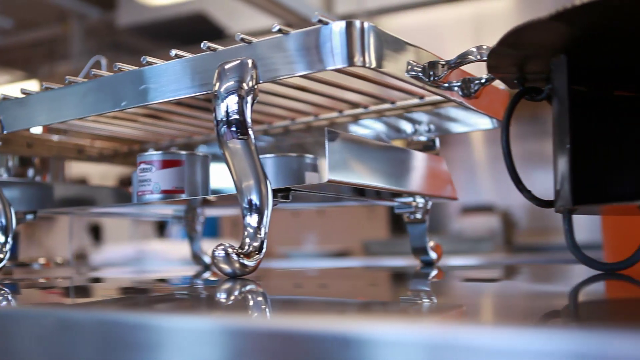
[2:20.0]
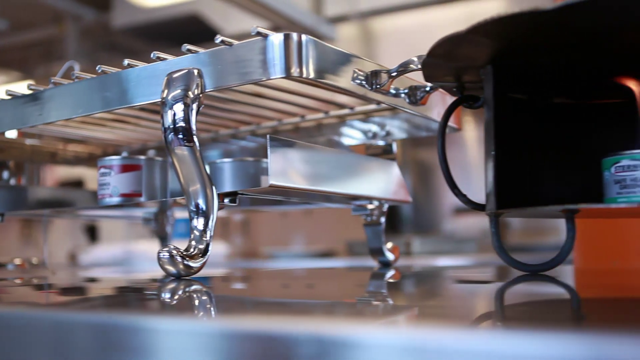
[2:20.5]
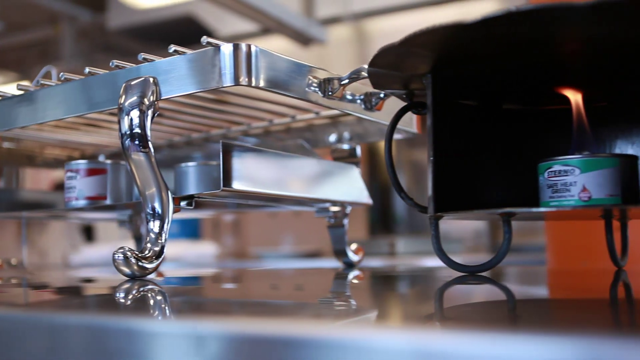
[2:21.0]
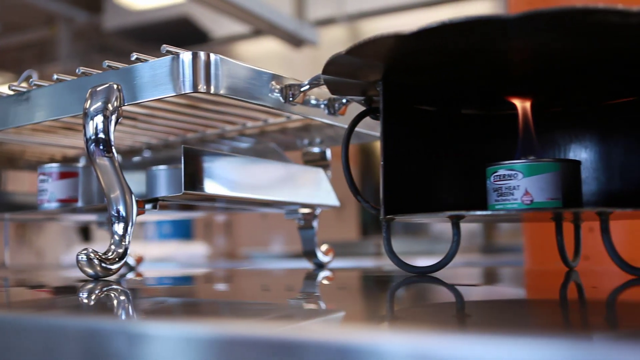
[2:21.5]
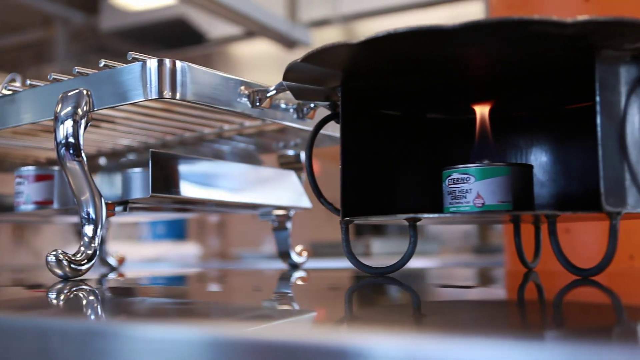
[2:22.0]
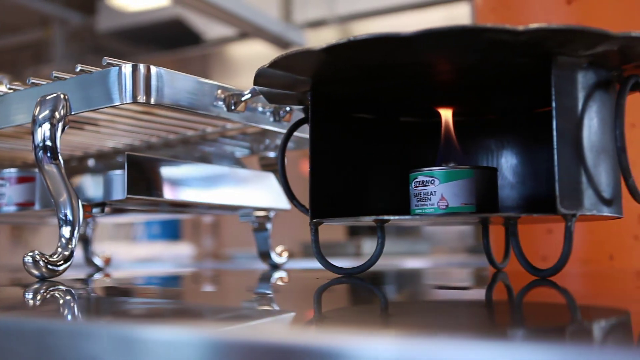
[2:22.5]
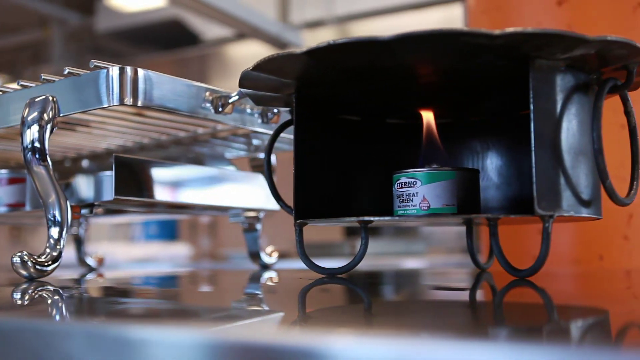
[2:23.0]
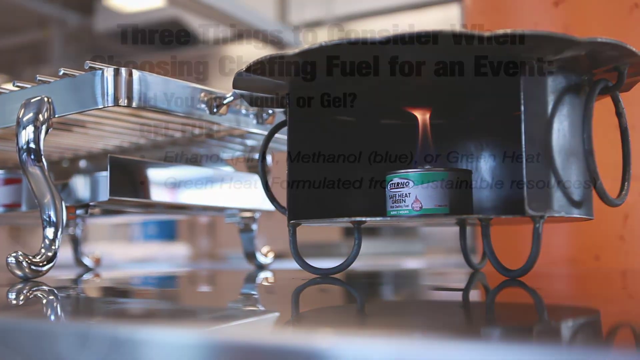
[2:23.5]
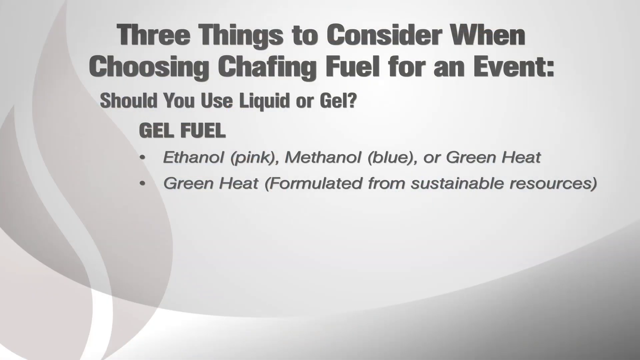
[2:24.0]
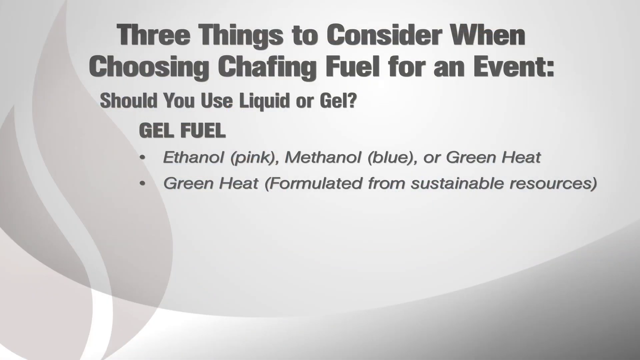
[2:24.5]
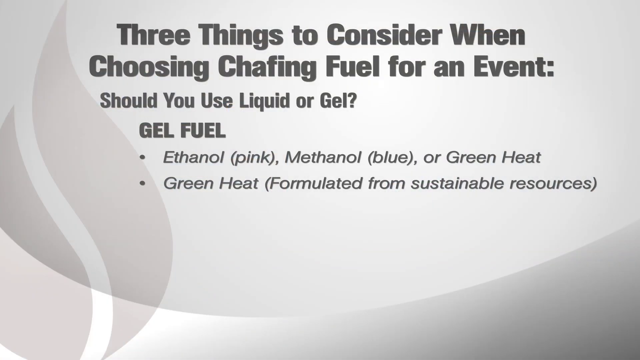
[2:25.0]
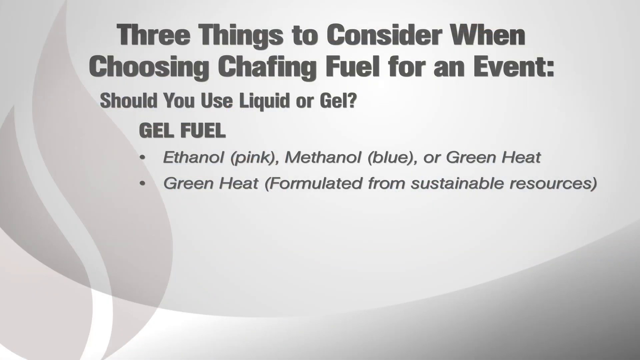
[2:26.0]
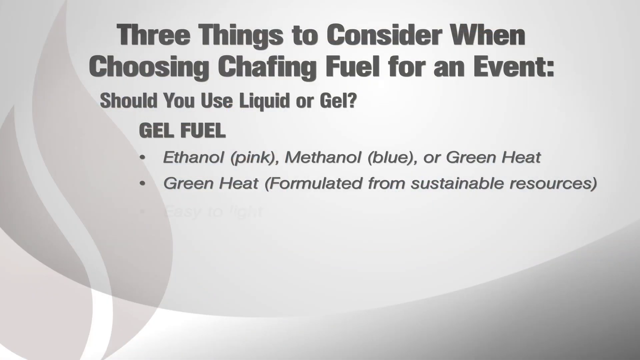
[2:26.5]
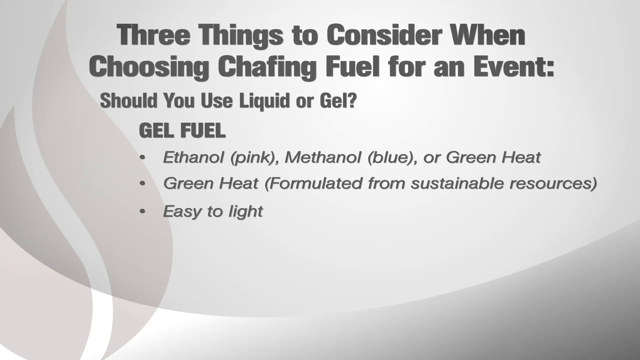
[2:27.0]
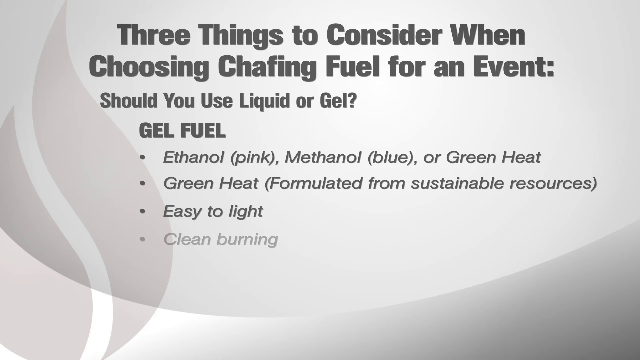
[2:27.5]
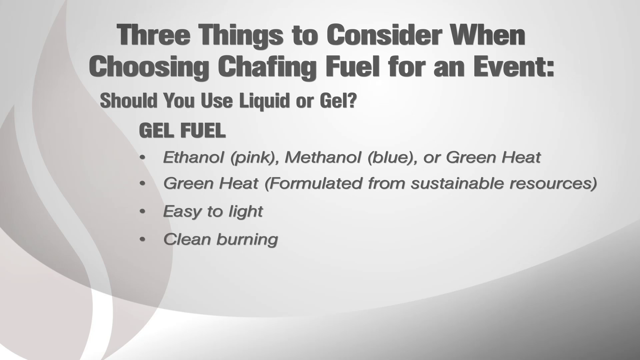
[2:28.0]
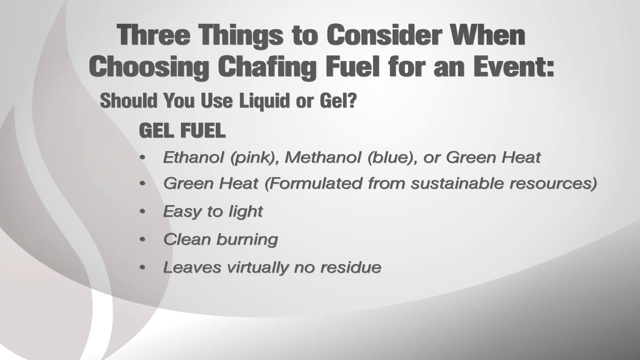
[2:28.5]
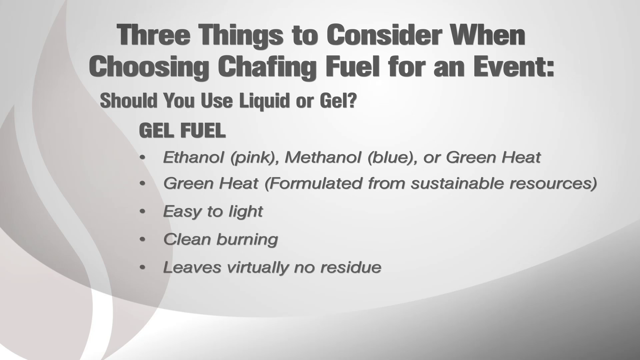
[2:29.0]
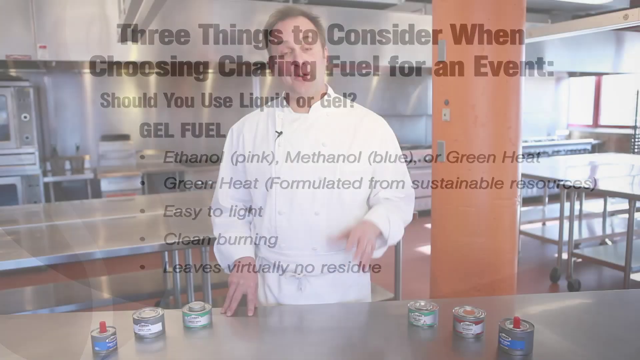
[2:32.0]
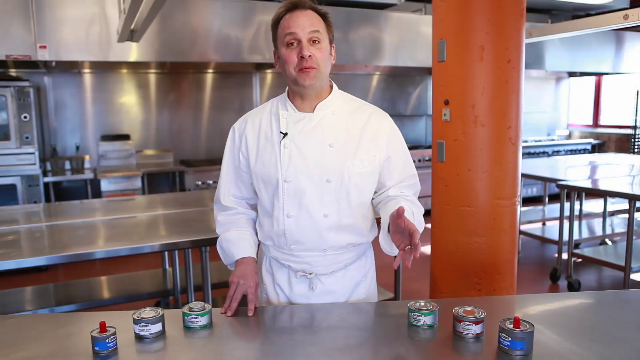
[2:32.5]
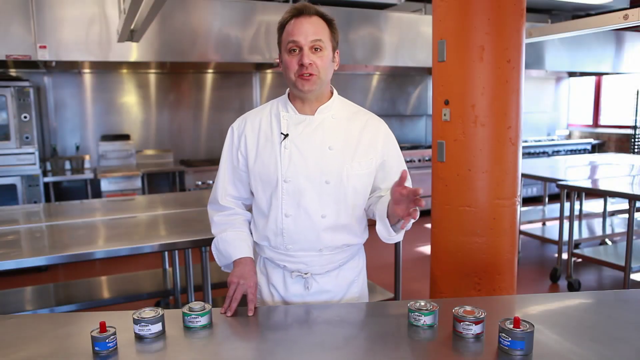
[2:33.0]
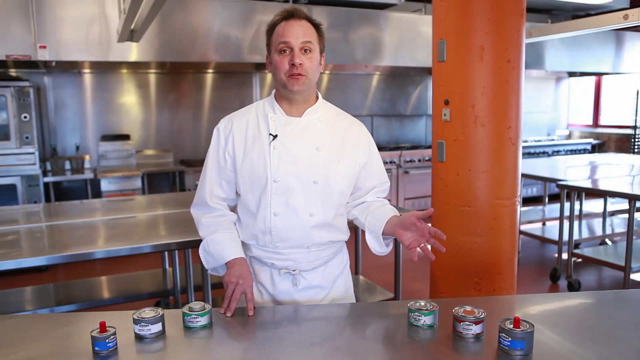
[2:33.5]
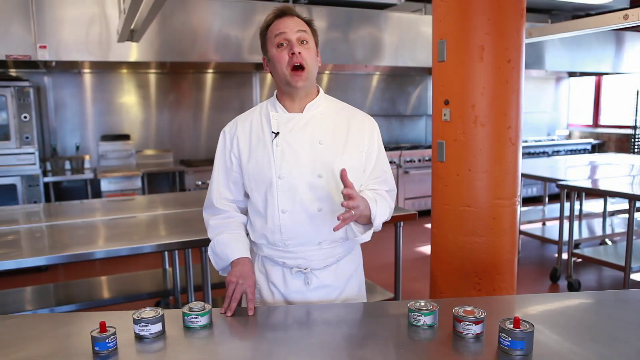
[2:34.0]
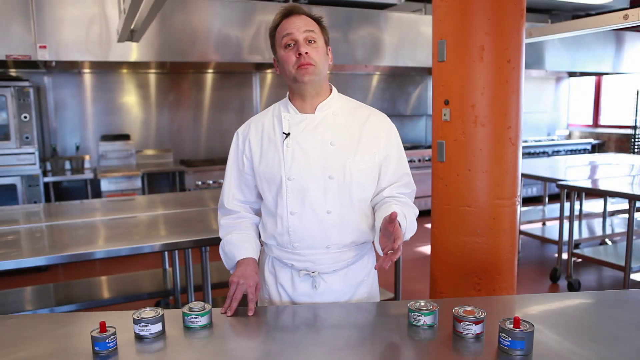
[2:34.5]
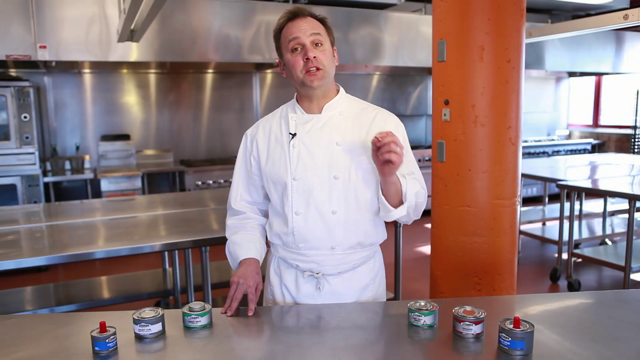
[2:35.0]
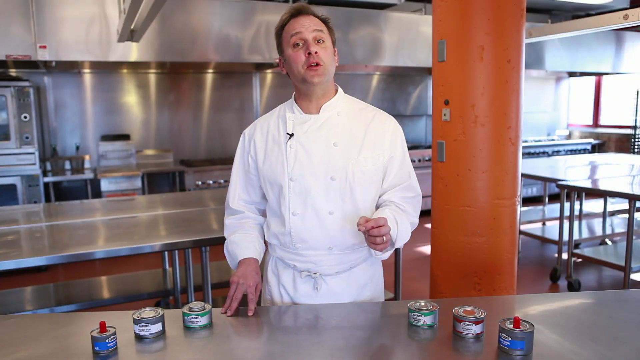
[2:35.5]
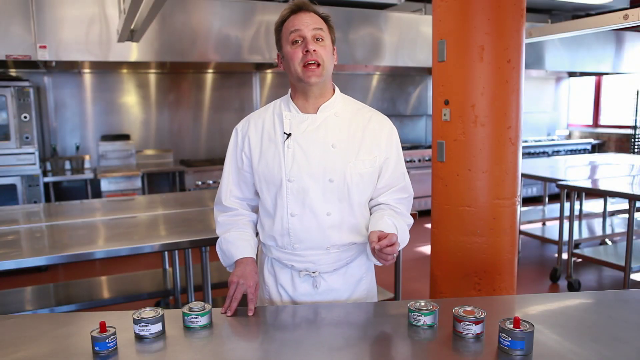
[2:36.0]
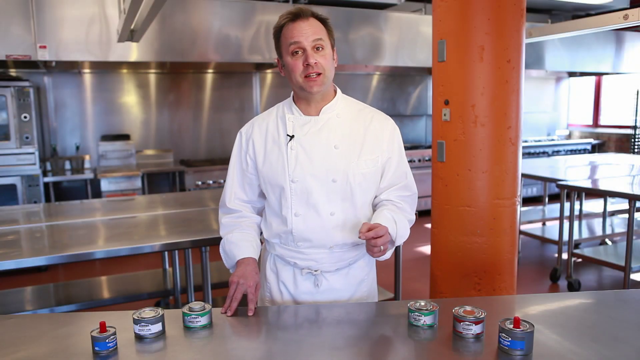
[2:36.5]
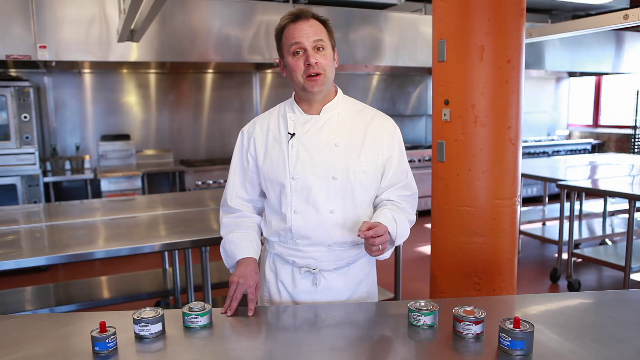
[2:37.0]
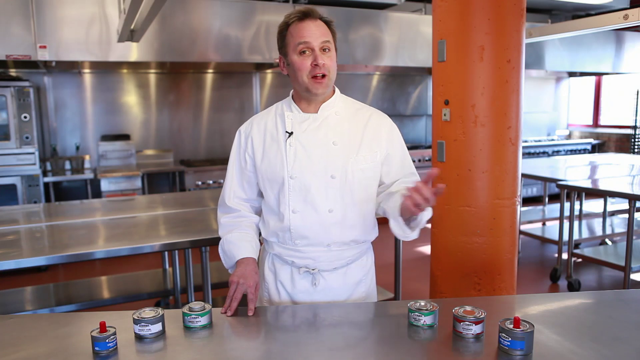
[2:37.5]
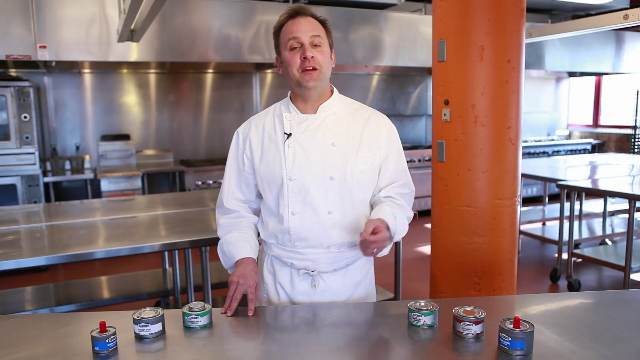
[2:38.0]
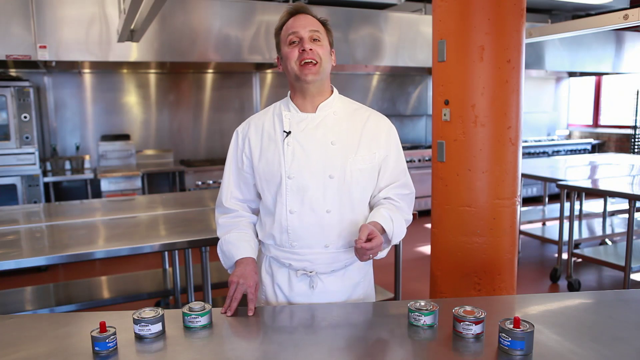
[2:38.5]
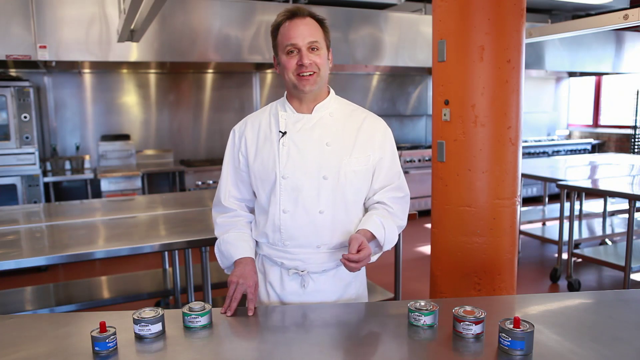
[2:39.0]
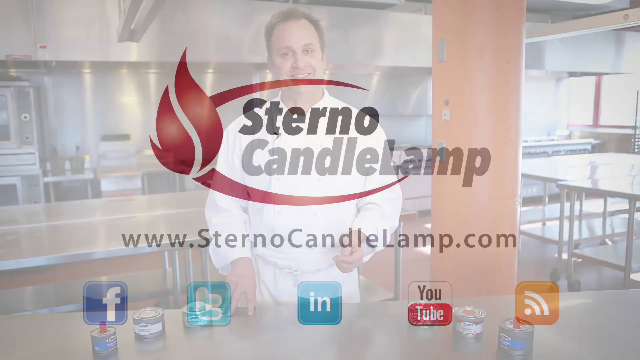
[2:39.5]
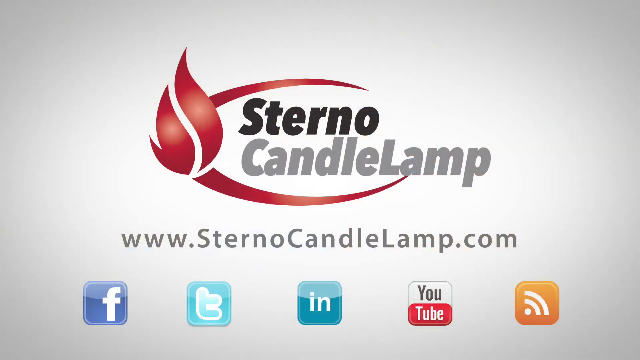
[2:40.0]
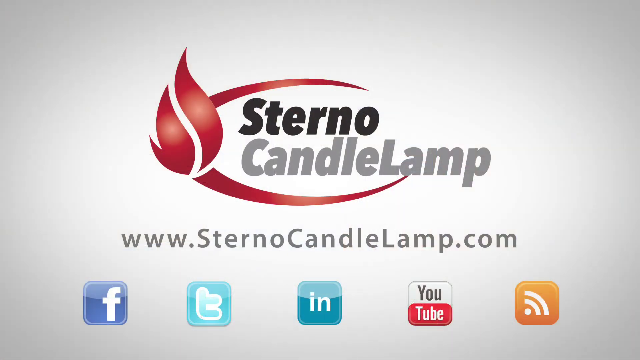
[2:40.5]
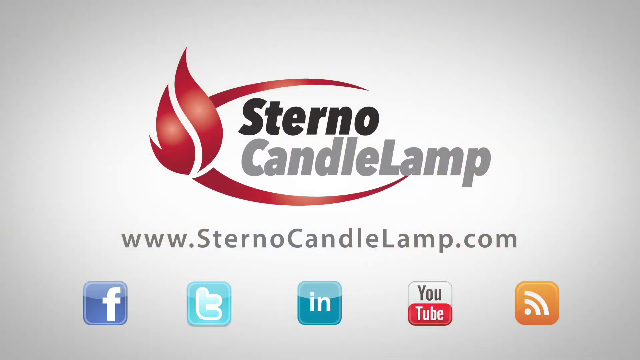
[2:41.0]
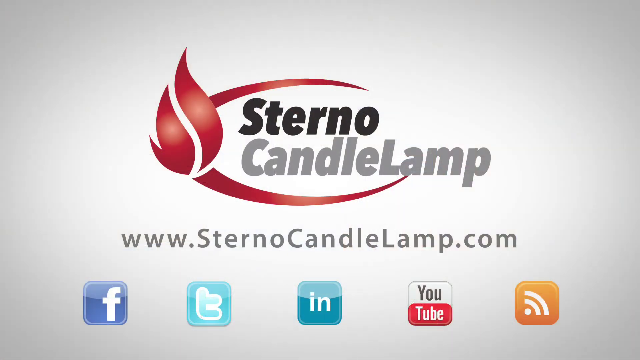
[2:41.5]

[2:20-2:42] A chafing pan is shown, particularly its bottom, with two cans of Sterno underneath it. The camera pans down a table to another pan that is black, with a flame burning underneath it and a Sterno can with green stripes on the top and bottom. A text screen then reads "three things to consider when choosing chafing fuel for an event. Should you use liquid or gel?", followed by the title "gel fuel" and the bullet points "ethanol (pink), methanol (blue), or green heat", "green heat (formulated from sustainable resources)", "easy to light", "clean burning" and "virtually no residue." The chef is shown speaking to the camera, standing in the middle of a commercial kitchen and gesturing with his left hand. A text box then enters as the next screen, reading "Sterno Candle Lamp, www.sternocandlelamp.com."